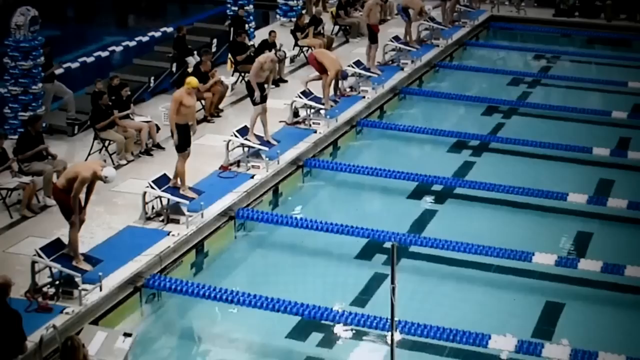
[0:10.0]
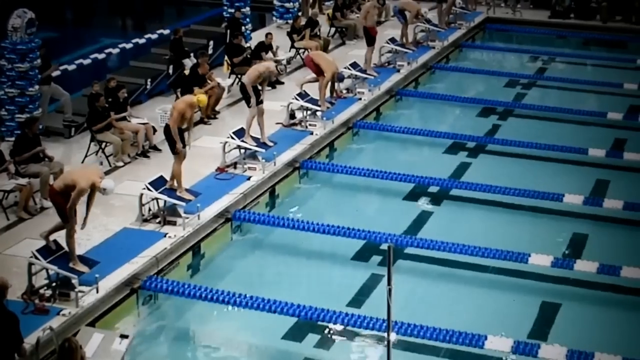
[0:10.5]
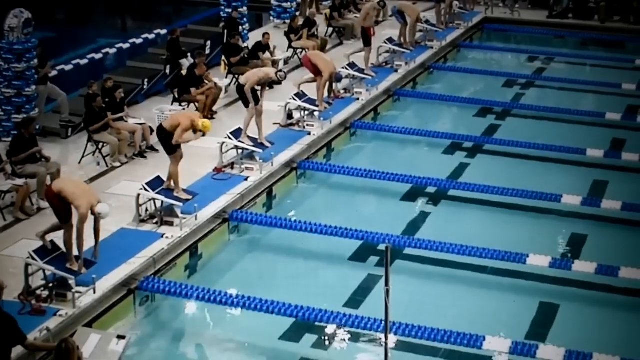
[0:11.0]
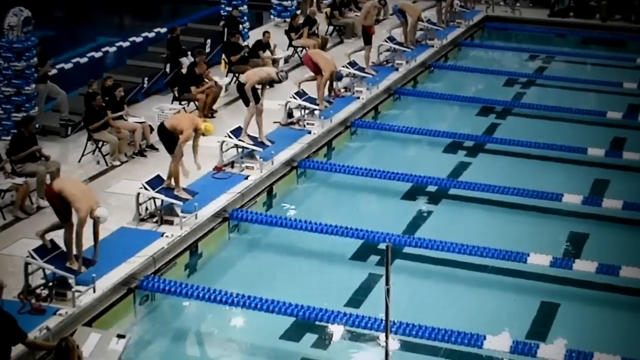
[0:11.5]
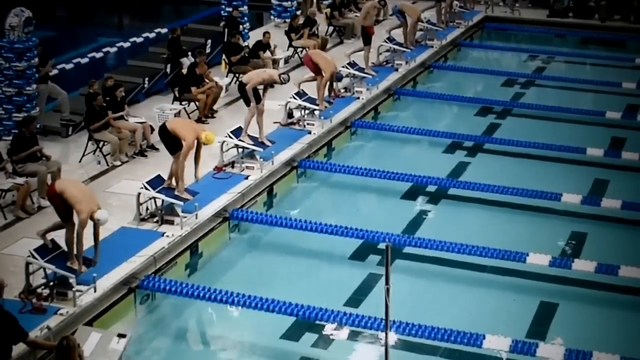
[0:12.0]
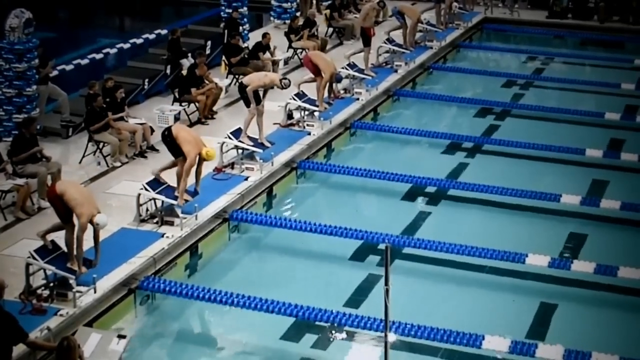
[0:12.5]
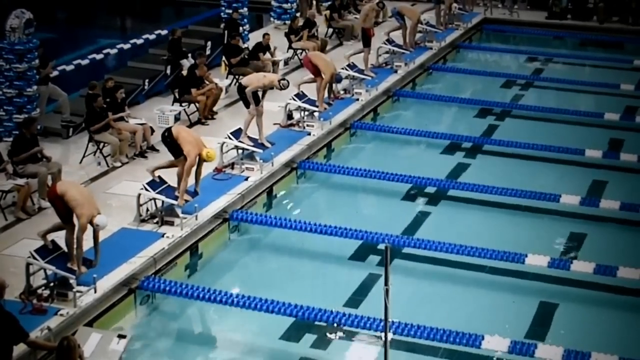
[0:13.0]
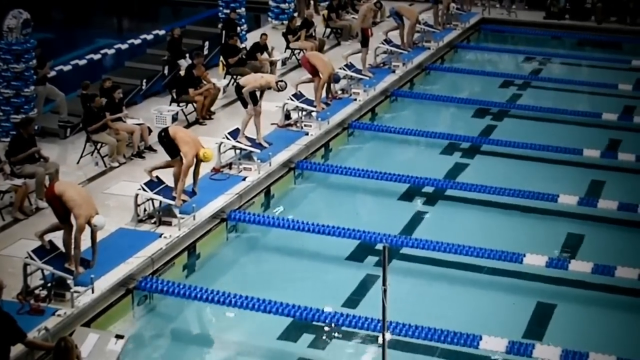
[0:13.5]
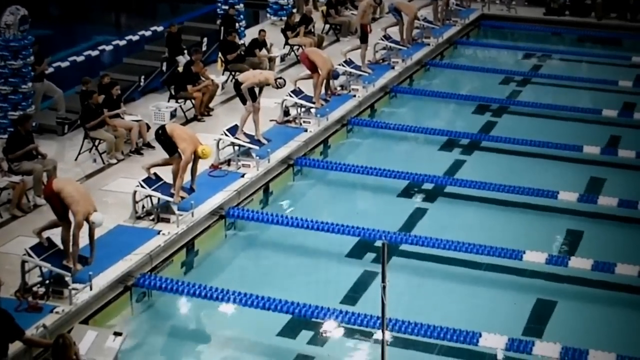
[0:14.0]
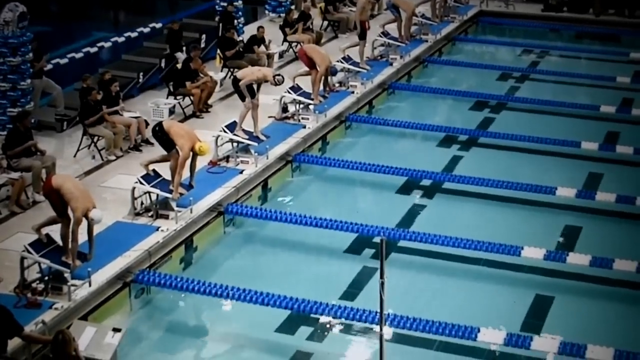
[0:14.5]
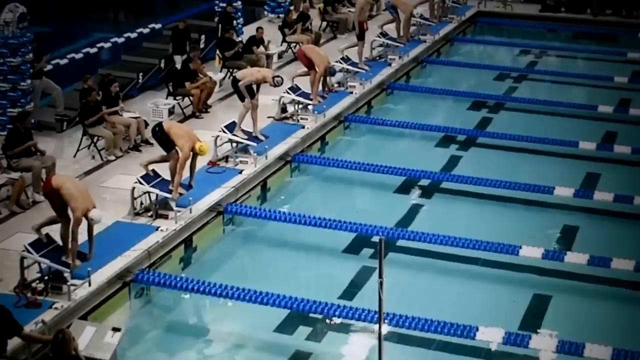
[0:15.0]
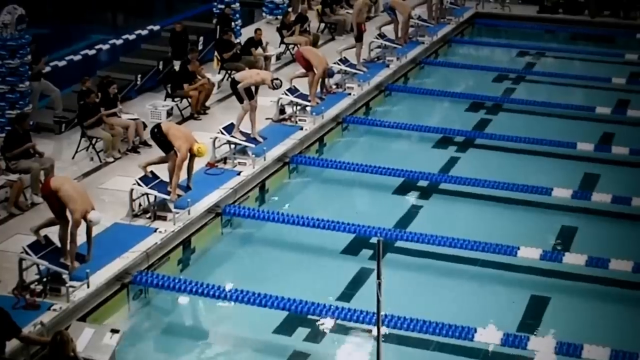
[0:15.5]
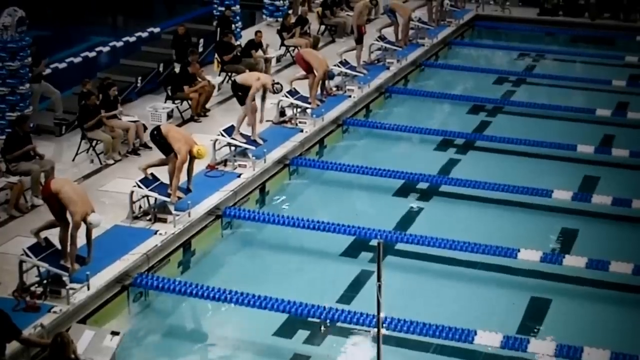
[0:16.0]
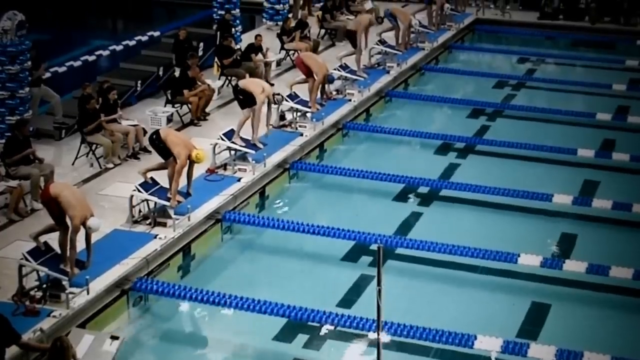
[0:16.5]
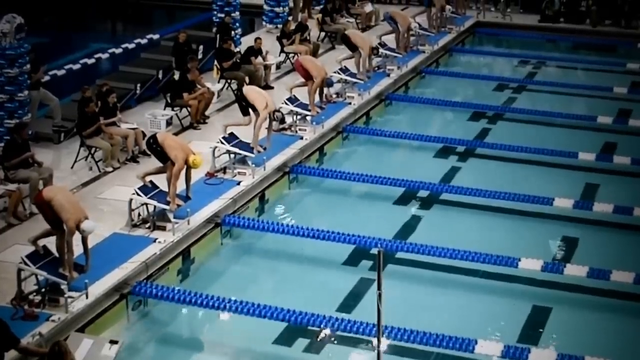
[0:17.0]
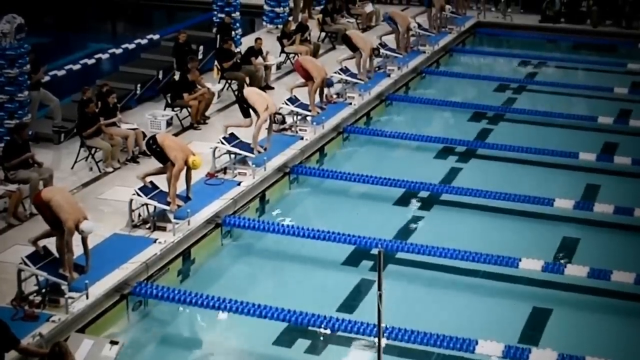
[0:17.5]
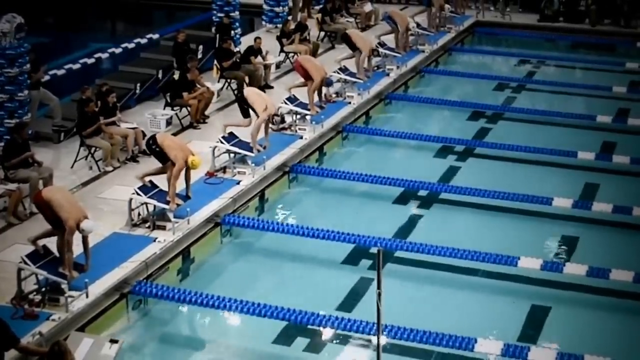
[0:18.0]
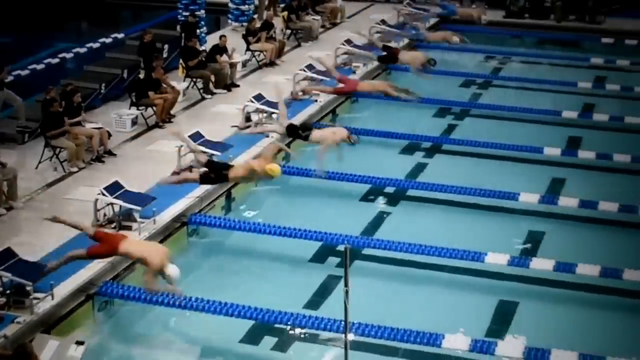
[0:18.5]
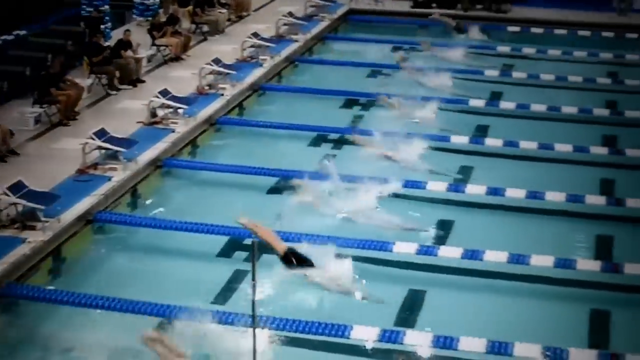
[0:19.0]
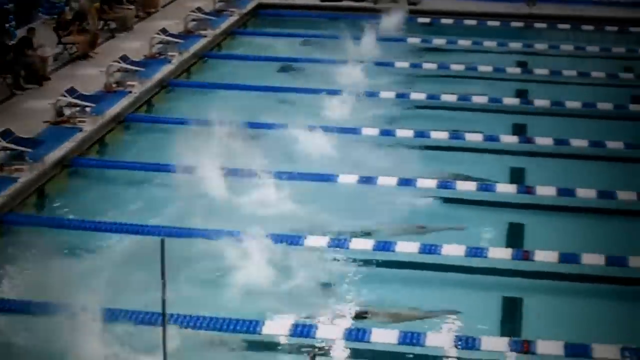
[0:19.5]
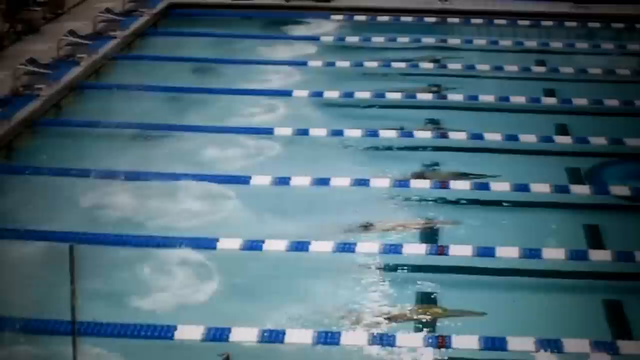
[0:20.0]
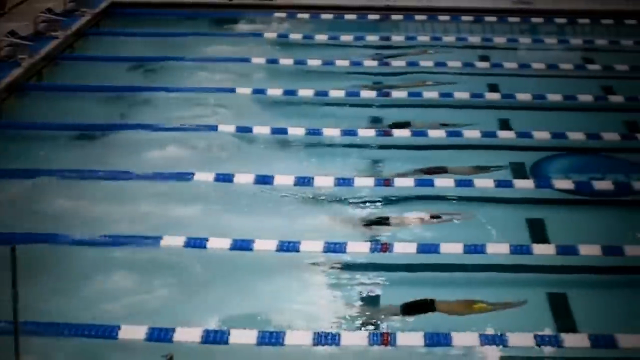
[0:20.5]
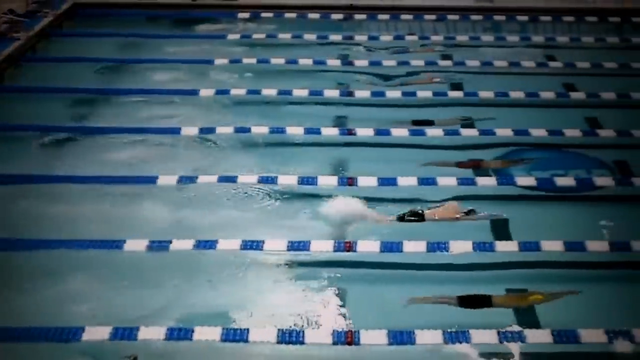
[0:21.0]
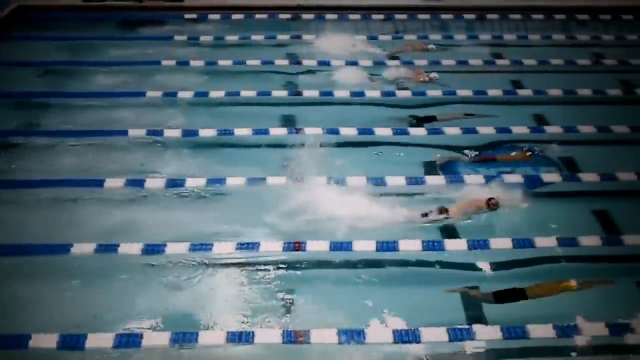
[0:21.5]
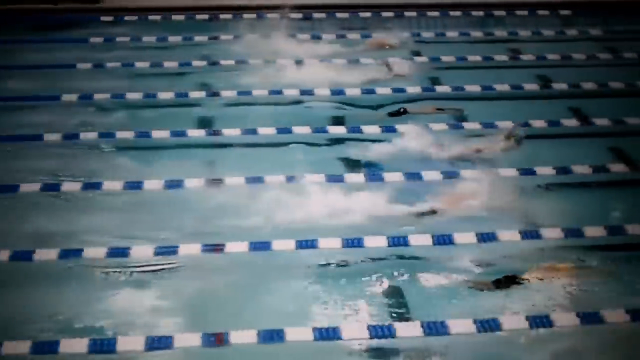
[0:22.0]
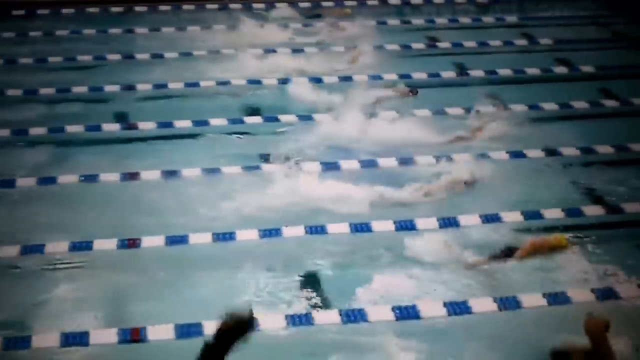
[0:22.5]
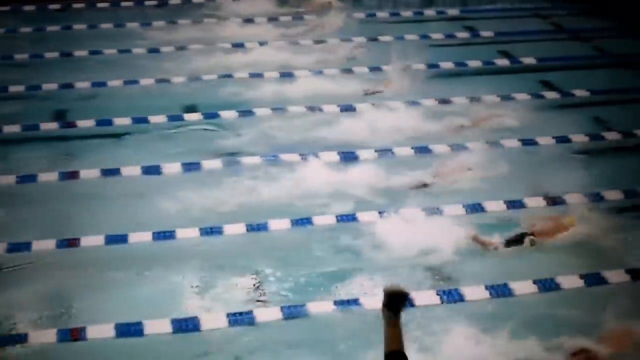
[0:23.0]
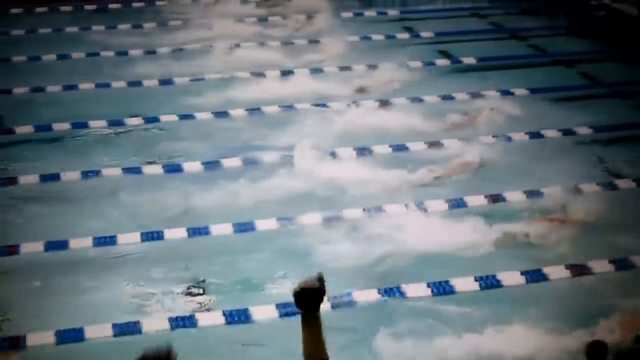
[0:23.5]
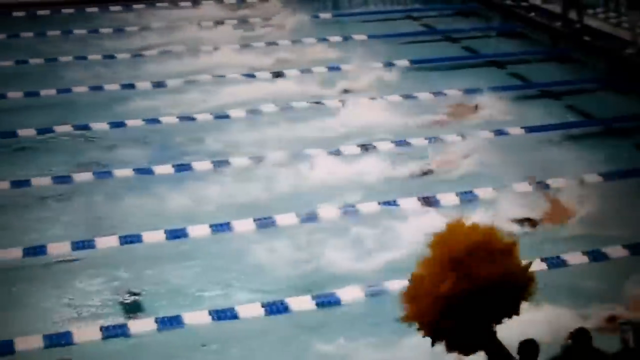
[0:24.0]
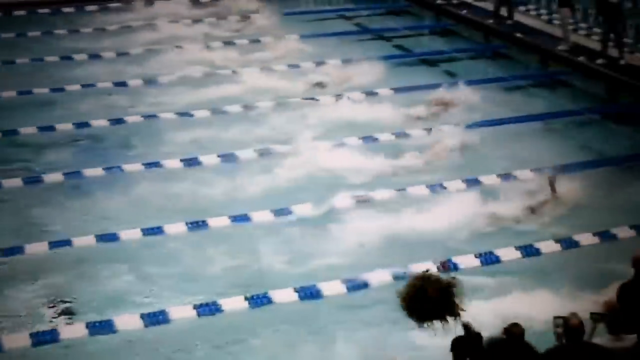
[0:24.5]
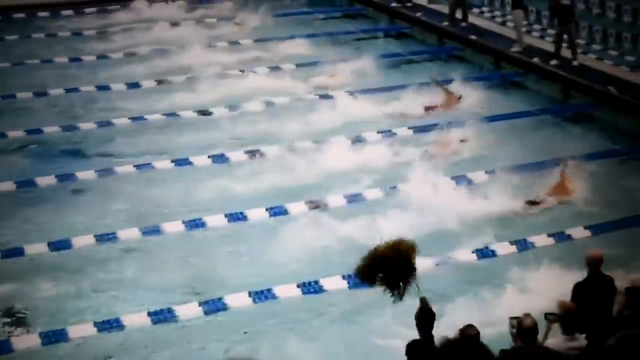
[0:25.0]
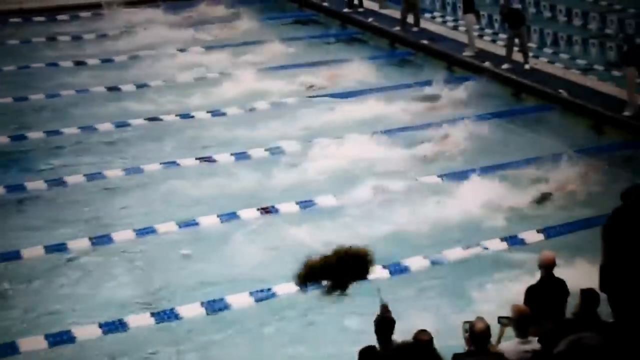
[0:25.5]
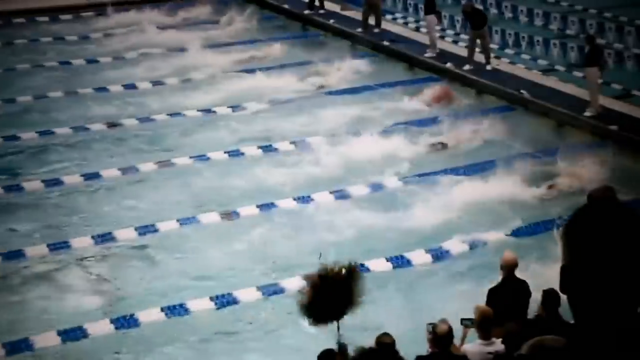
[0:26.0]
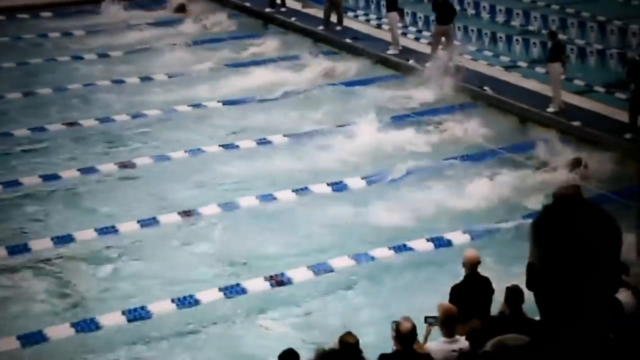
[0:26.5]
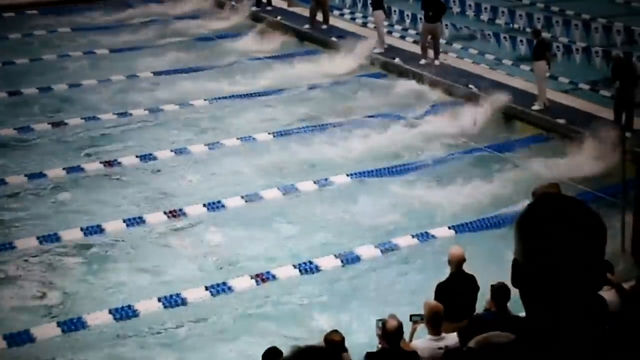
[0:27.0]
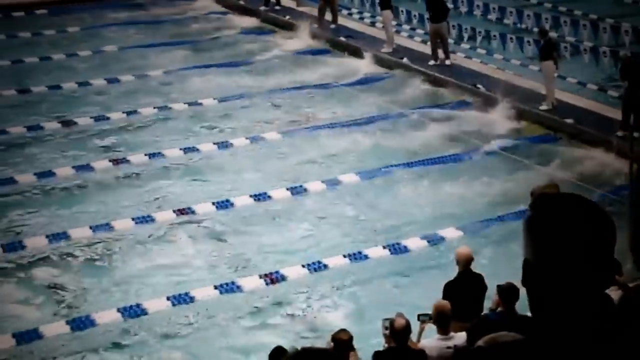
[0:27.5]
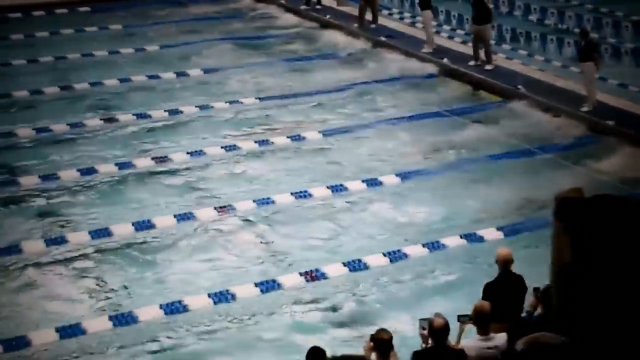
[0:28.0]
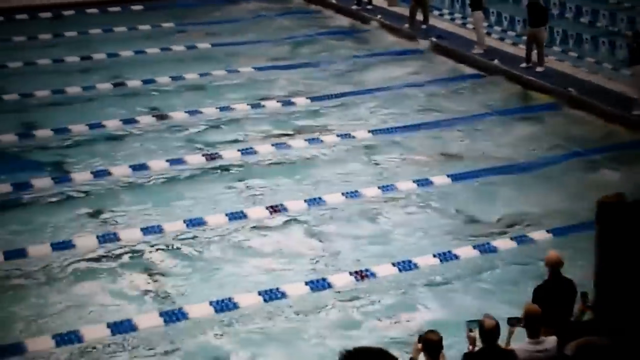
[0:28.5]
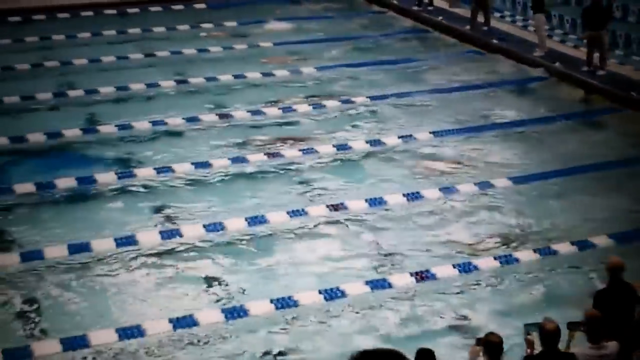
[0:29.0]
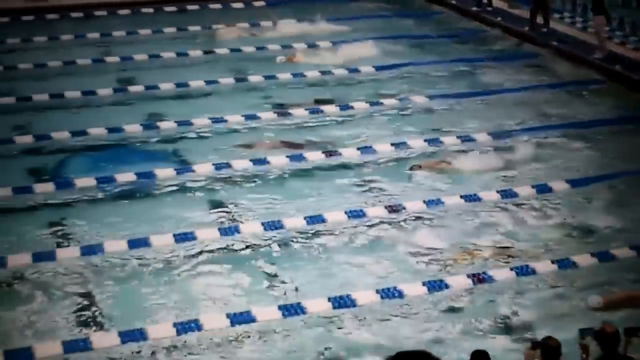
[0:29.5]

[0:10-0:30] The divers get ready to dive. One of them is bent over, touching the diving board, while the majority stand up. Then they all seem to bend down with one foot on the back board to give themselves a kick off. They all jump into the water and swim, with a clear leader ahead of the rest. Entering the water, they do a kind of worm-type move, arms out in front and legs kicking very fast, with not a lot of water splatter. At the other side of the pool they touch, kick, turn around and swim back toward their diving boards. Judges in black shirts and khaki pants stand at that end, watching, apparently to see who gets there first and that each swimmer touches the end of the pool. As the swimmers dive in, a few people in the crowd are cheering and waving pom-pom type items.